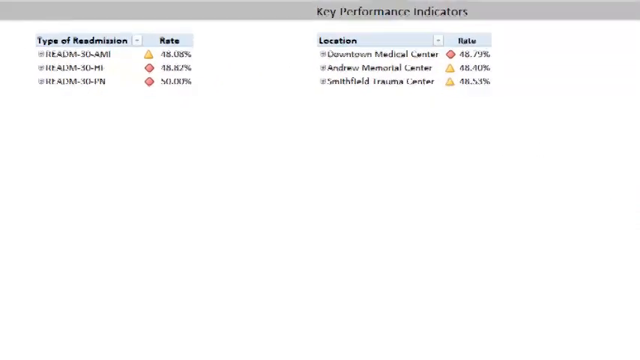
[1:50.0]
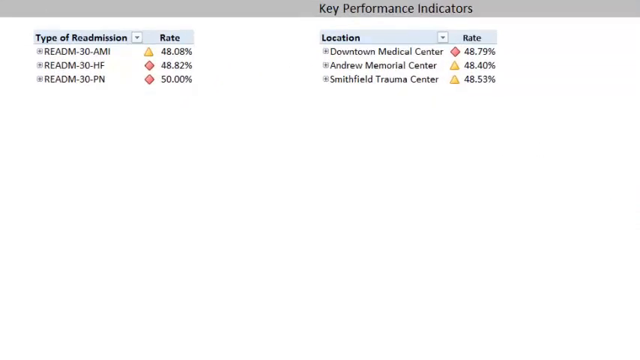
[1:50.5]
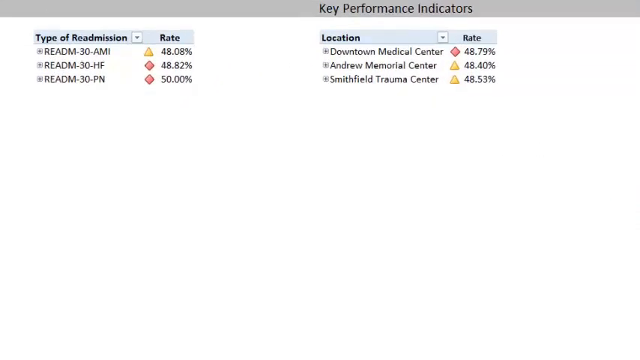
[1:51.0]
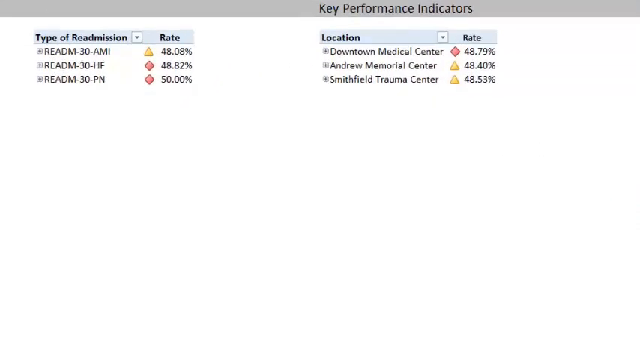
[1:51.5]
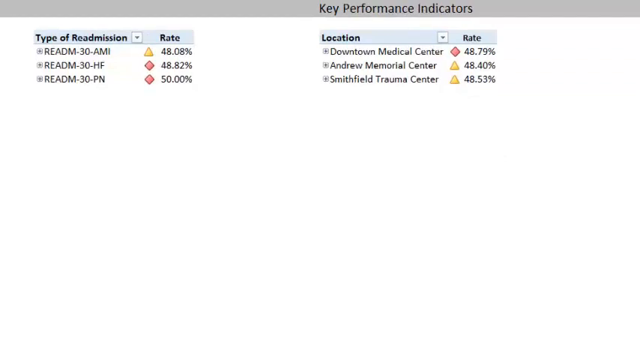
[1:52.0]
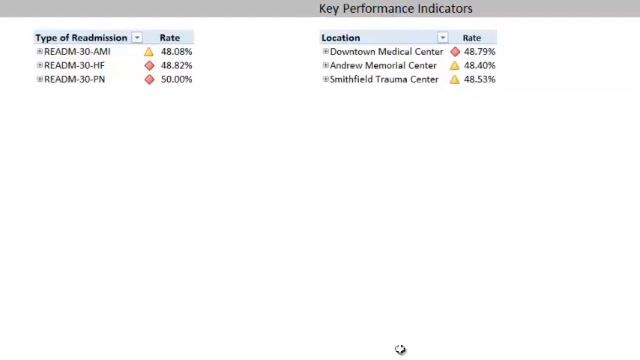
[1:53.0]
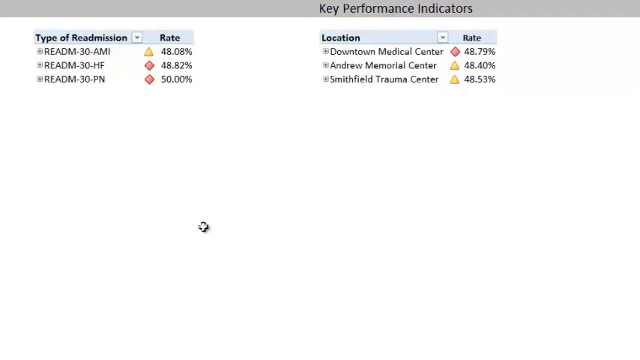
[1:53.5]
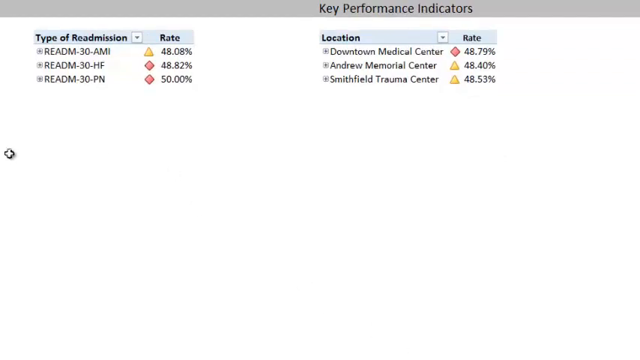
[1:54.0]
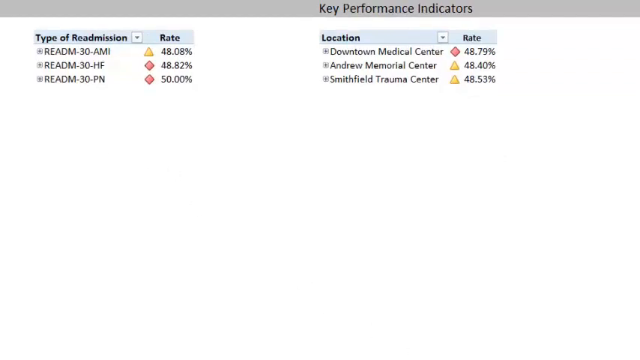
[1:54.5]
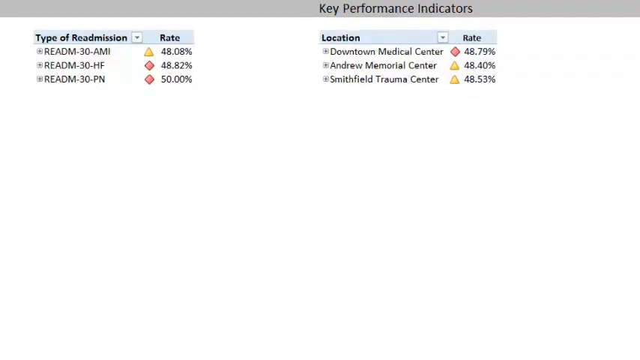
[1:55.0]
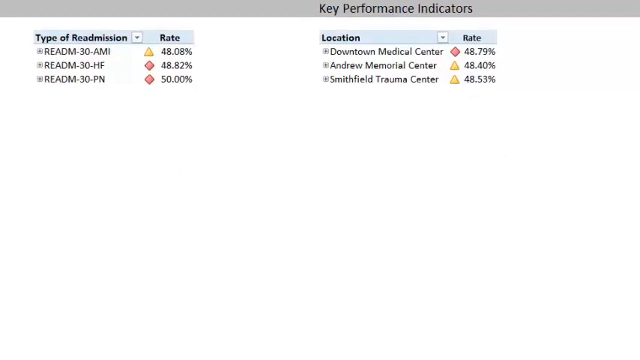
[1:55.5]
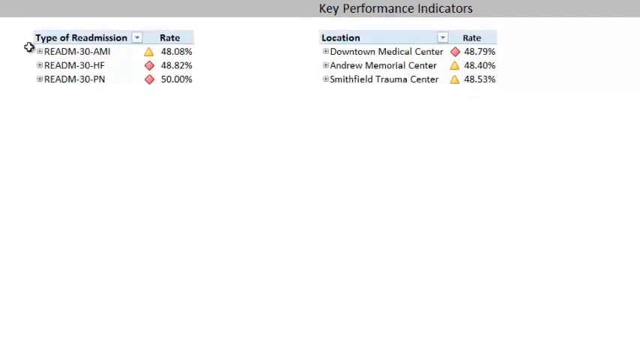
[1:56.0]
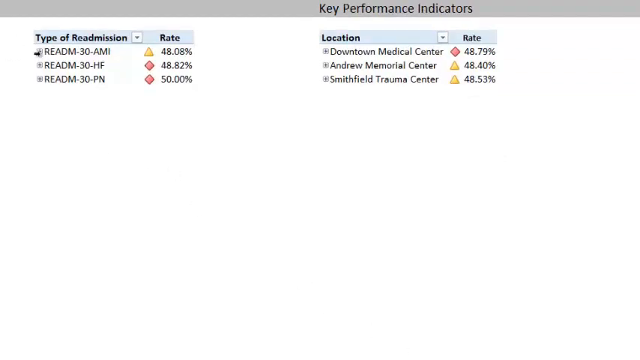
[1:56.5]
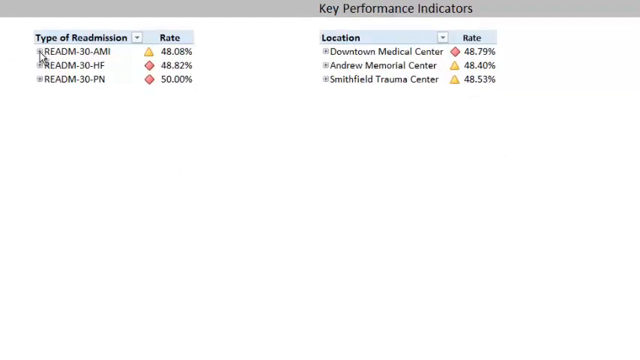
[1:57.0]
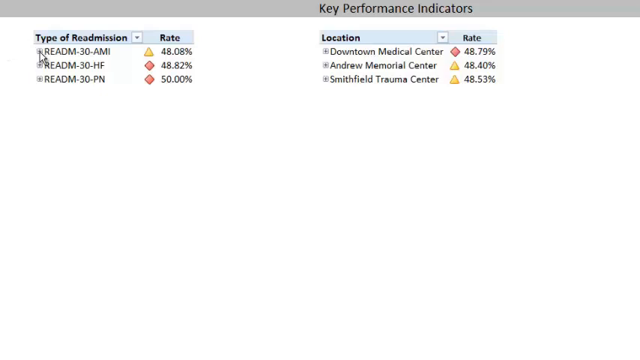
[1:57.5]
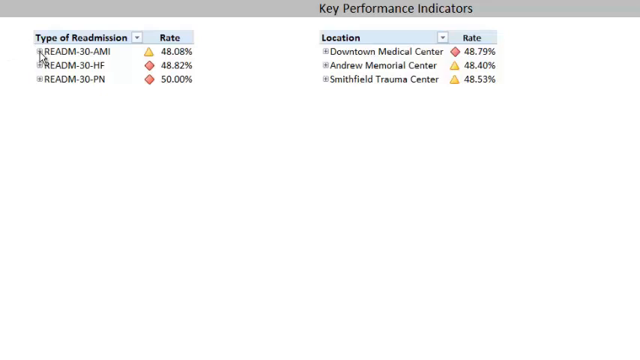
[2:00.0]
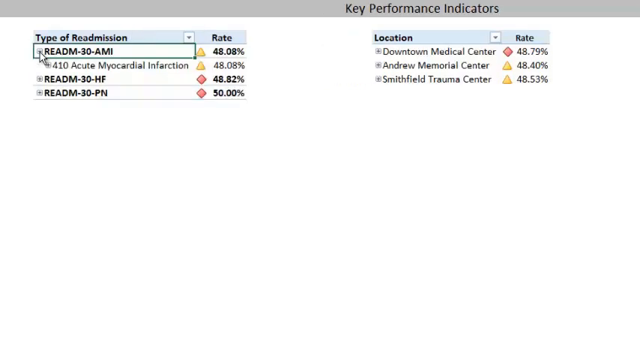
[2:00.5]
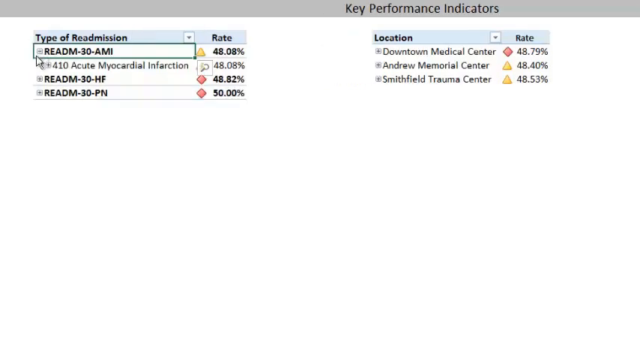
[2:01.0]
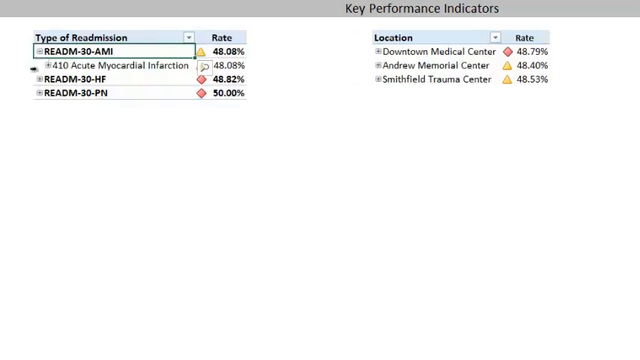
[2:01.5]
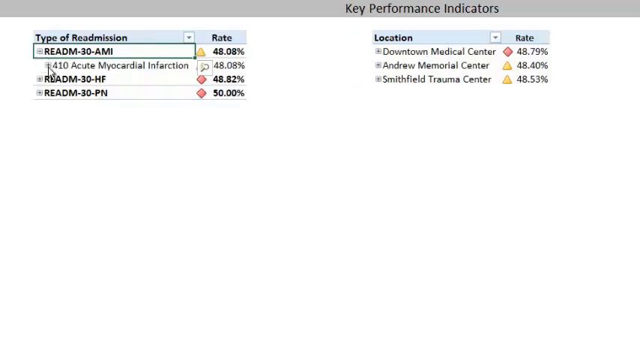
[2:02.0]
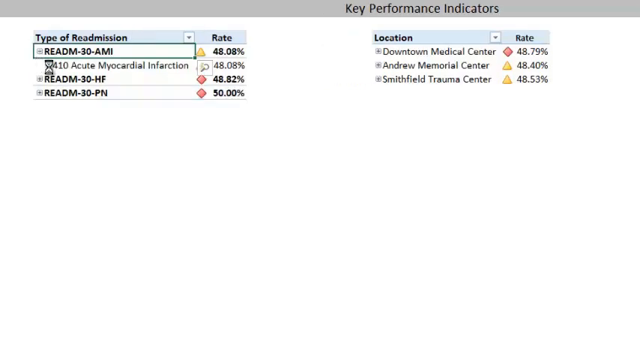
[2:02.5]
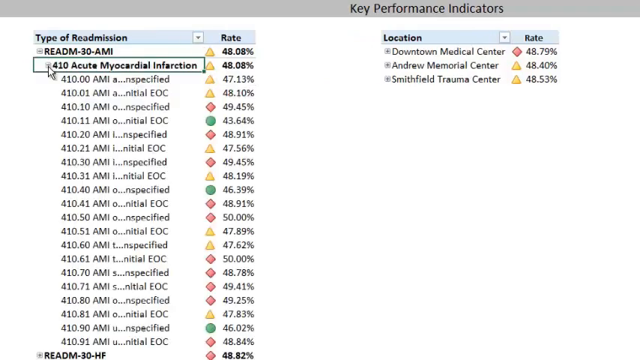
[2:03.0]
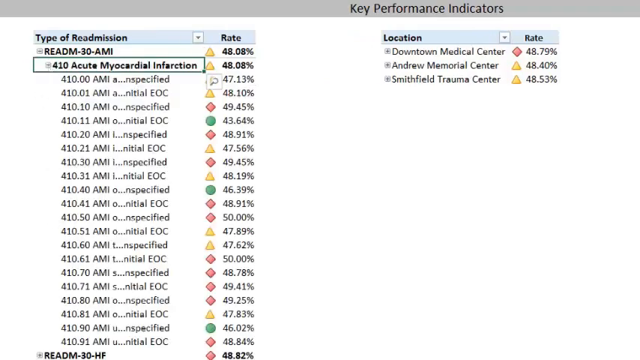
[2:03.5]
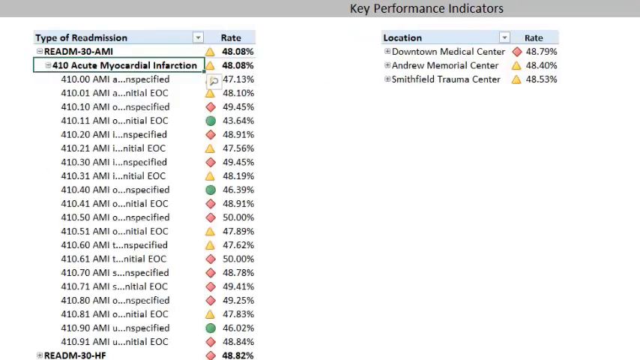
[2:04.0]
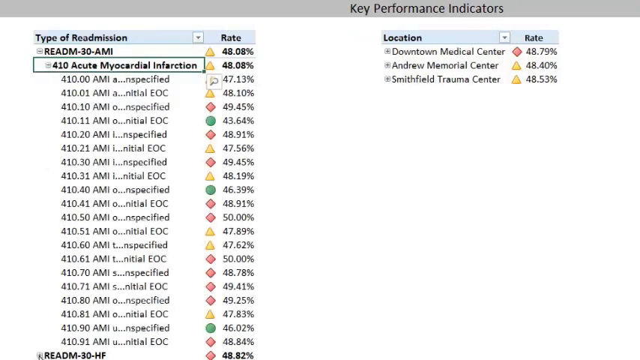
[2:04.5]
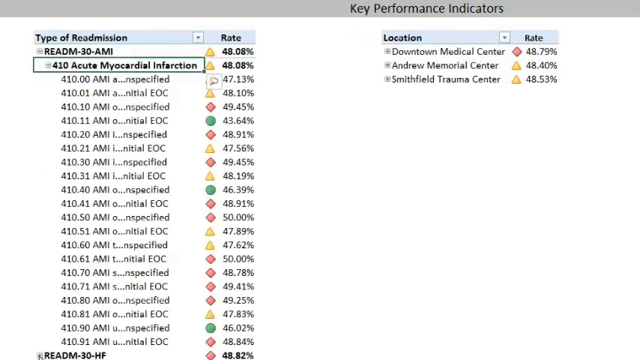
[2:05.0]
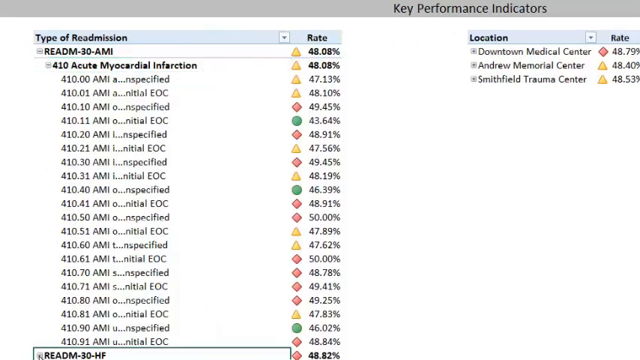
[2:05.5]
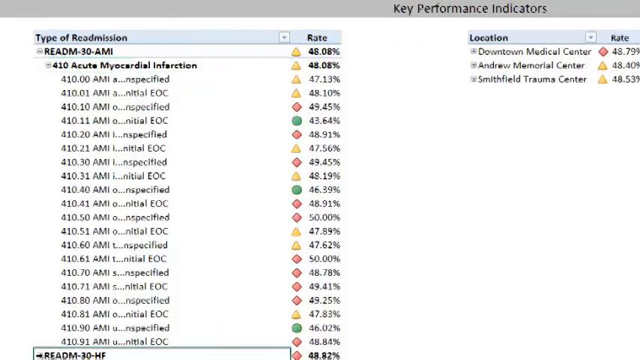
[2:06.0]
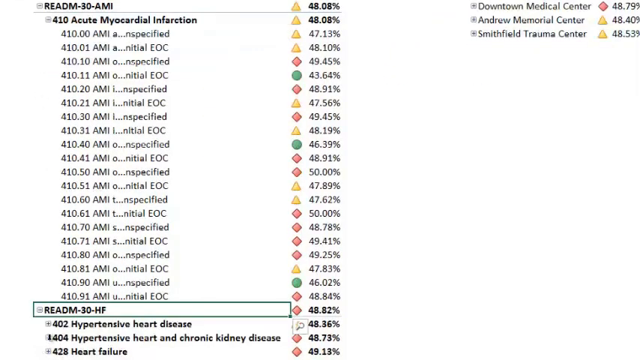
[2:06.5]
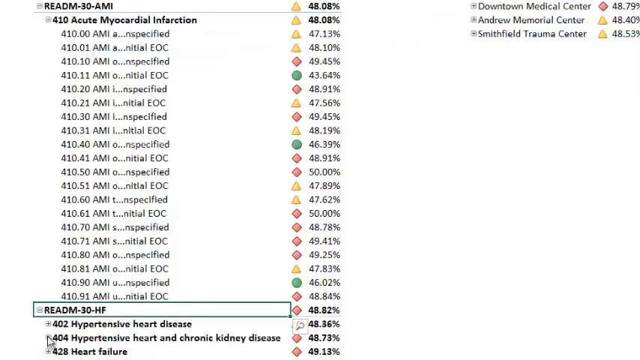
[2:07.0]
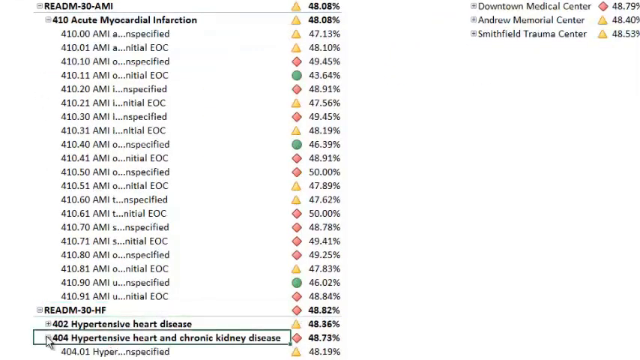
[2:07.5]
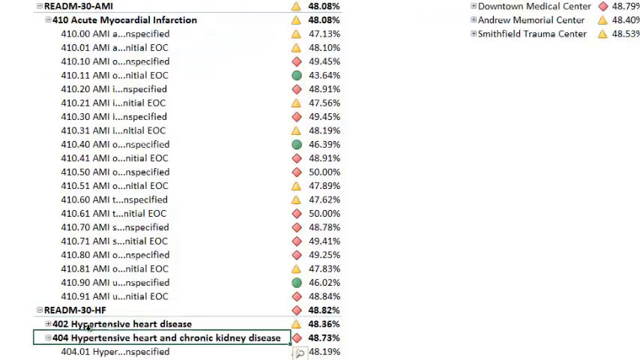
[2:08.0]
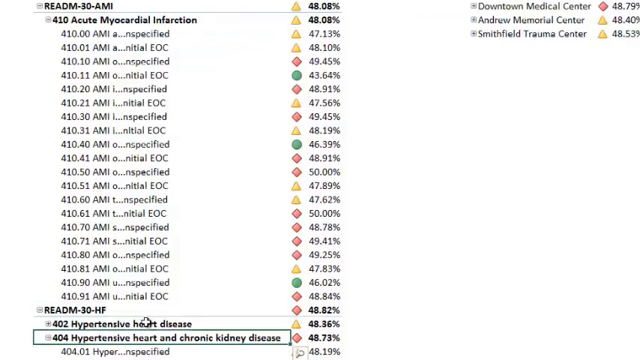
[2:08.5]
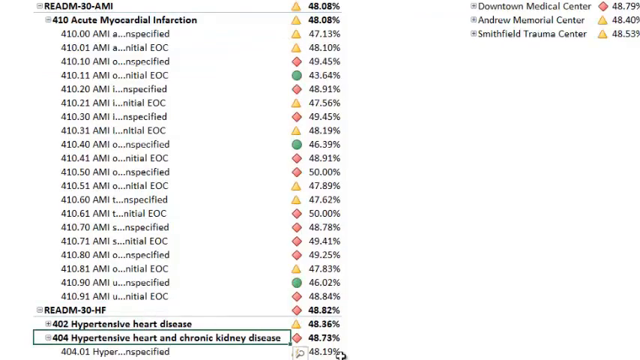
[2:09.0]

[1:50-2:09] A white background has a gray banner with black text reading "key performance indicators." Columns show type of readmission with rate, and location with rate. Under type of readmission are "read M30 AMI" at 48.08 percent, "read M30 MI" at 48.82 percent, and "read M30 PN" at 50 percent. Under location are downtown medical center at 48.79 percent, Andrew Memorial Center at 48.40 percent, and Smithfield Trauma Center at 48.53 percent. The mouse comes in, goes over to read M30 AMI under type of readmission, and clicks it, revealing another drop-down box reading "410 acute myocardial infarction." The user clicks that as well, and more text pops up with other rates. The view seems to be expanded a bit to make it larger. A small green box is over "read M30 HF," and "hypertensive heart disease" and "hypertensive heart and chronic kidney disease" are visible.